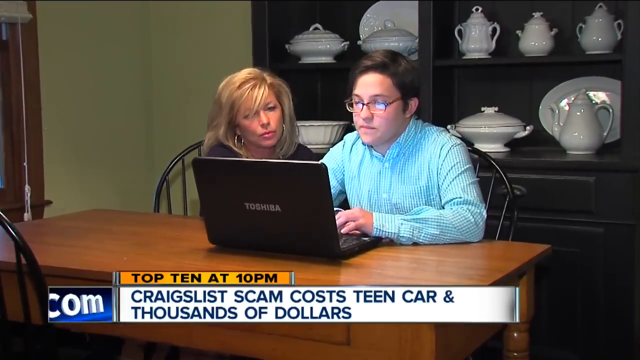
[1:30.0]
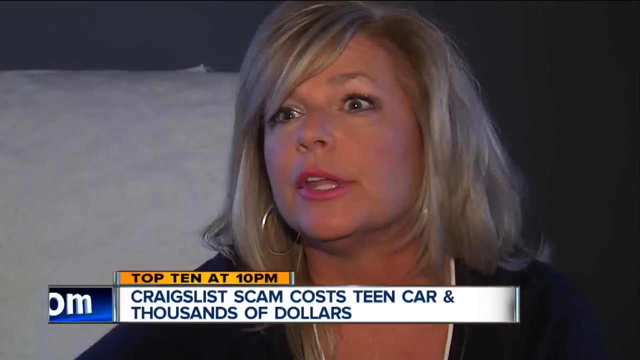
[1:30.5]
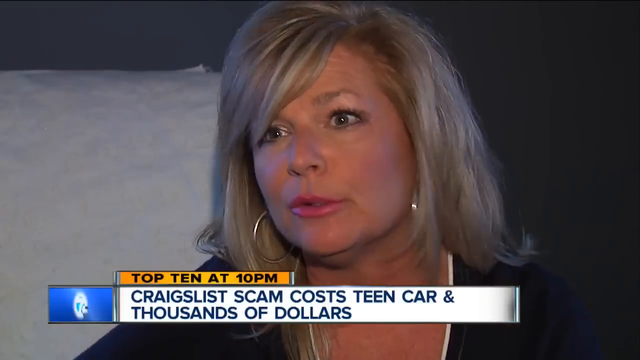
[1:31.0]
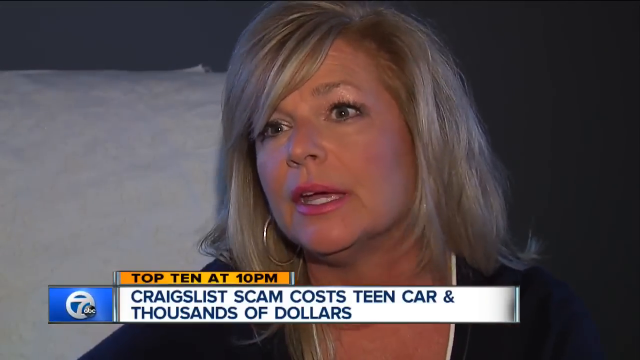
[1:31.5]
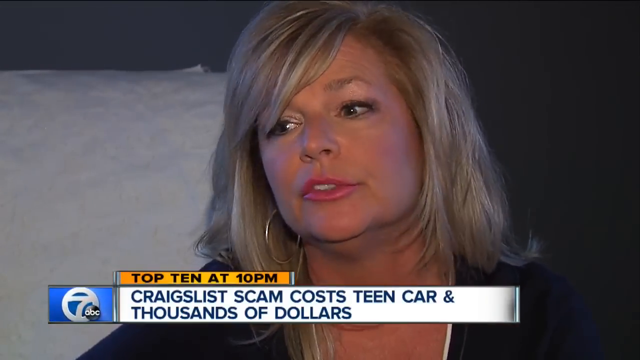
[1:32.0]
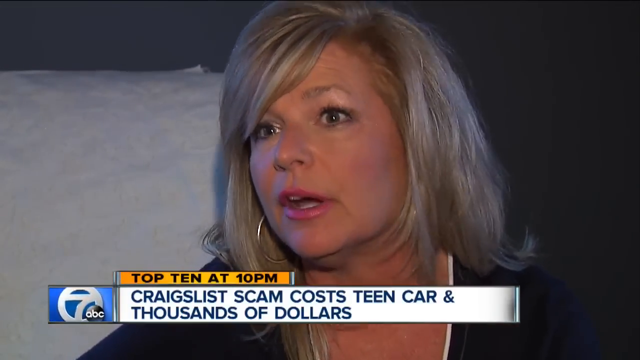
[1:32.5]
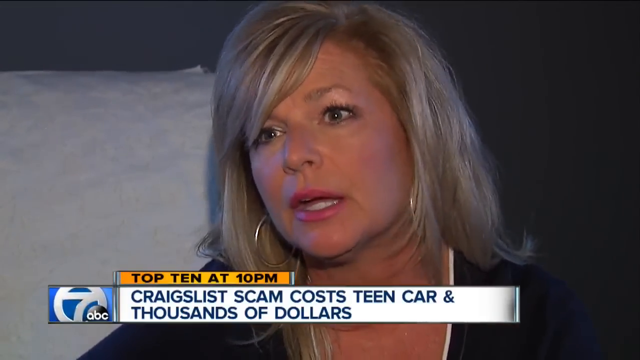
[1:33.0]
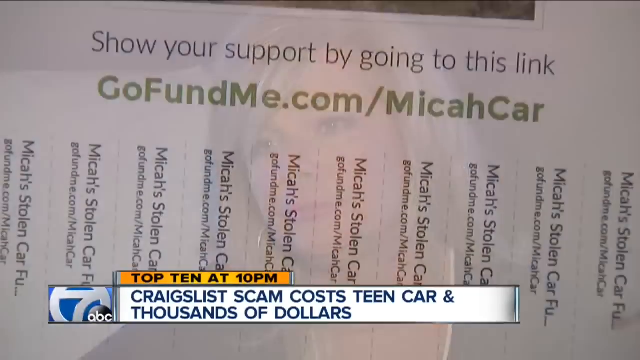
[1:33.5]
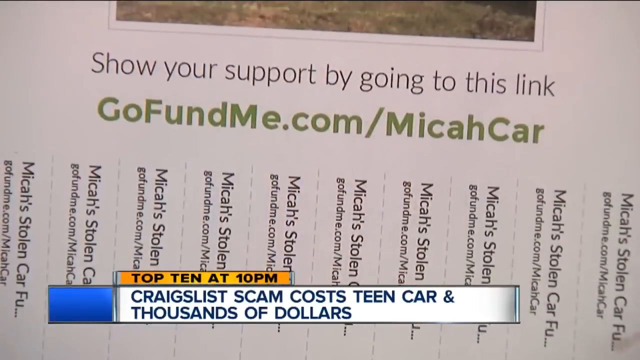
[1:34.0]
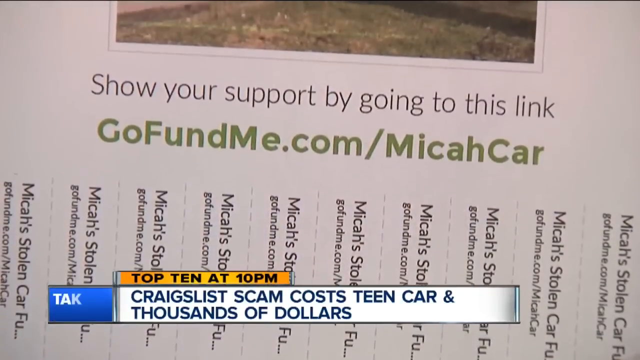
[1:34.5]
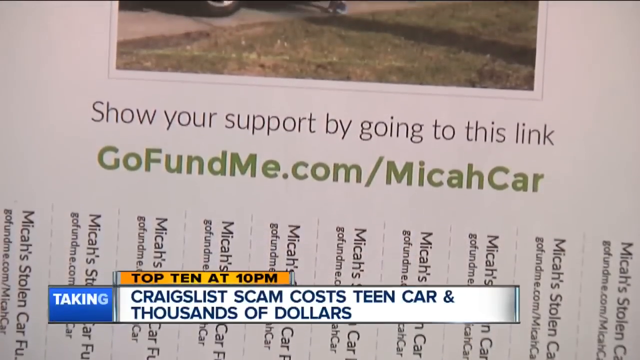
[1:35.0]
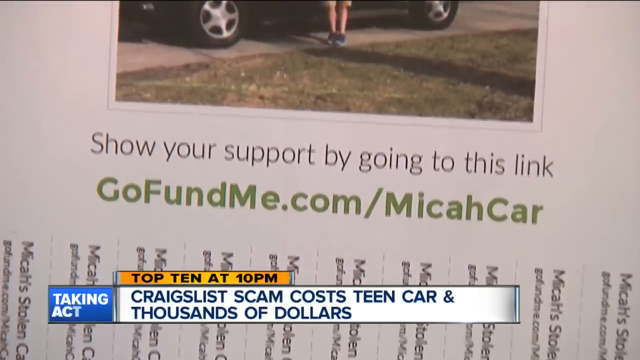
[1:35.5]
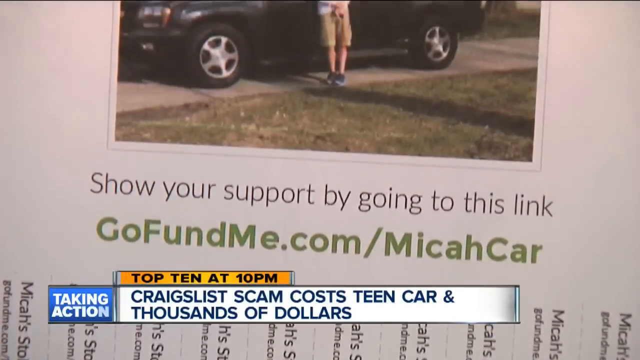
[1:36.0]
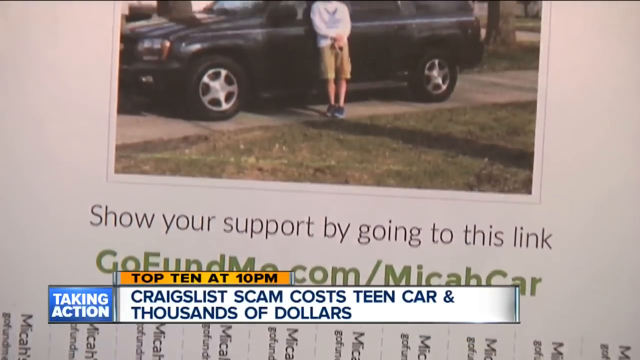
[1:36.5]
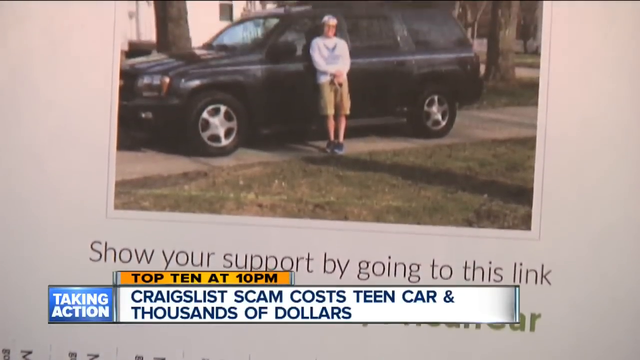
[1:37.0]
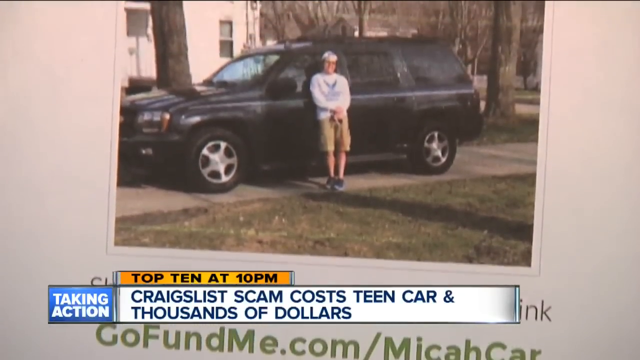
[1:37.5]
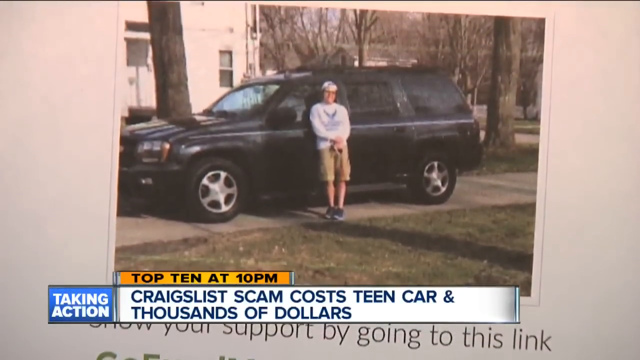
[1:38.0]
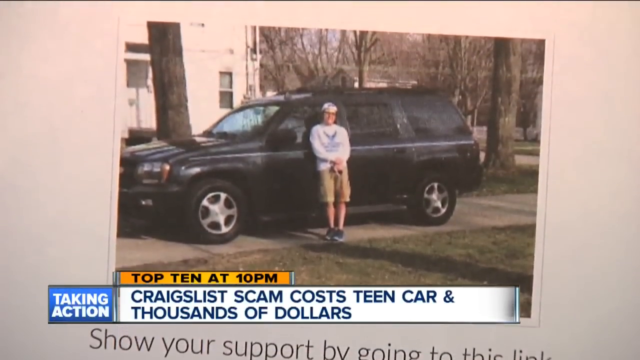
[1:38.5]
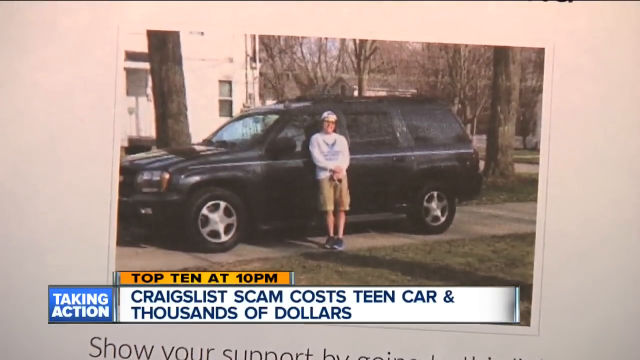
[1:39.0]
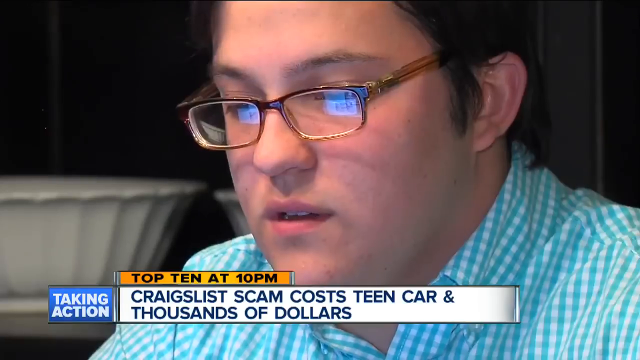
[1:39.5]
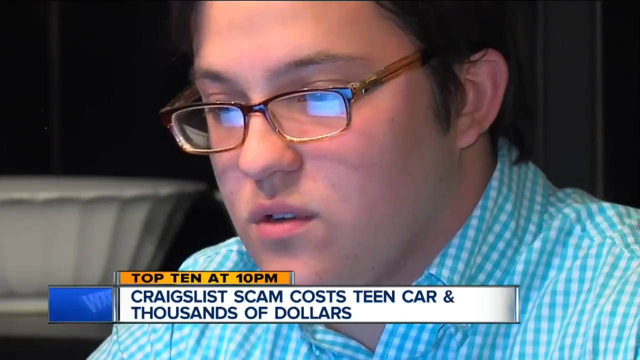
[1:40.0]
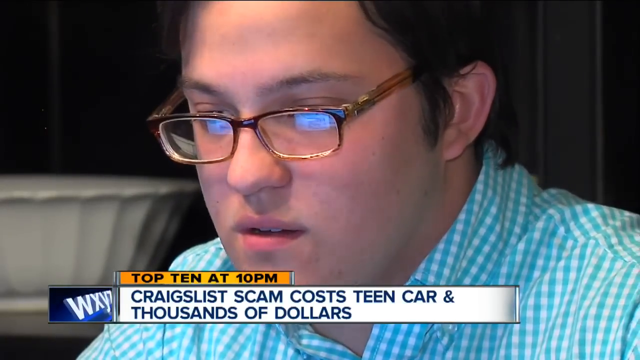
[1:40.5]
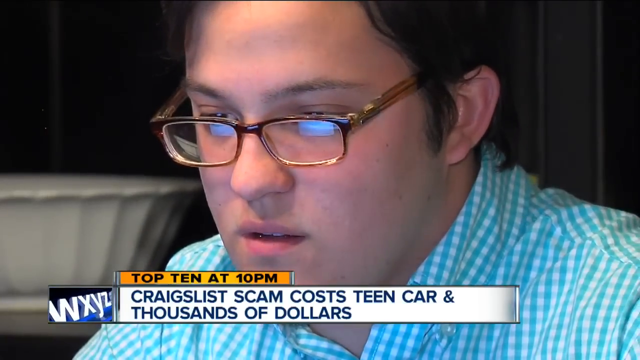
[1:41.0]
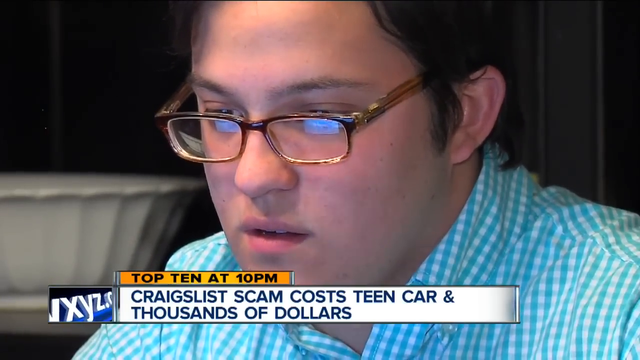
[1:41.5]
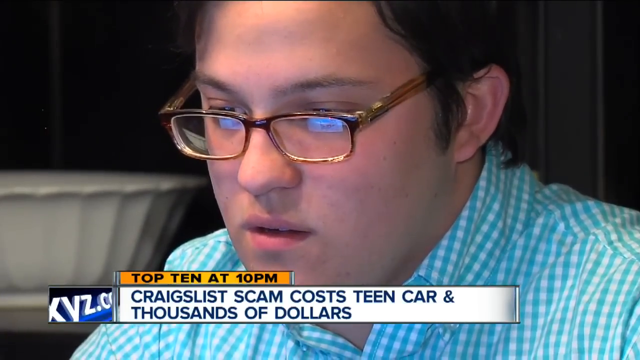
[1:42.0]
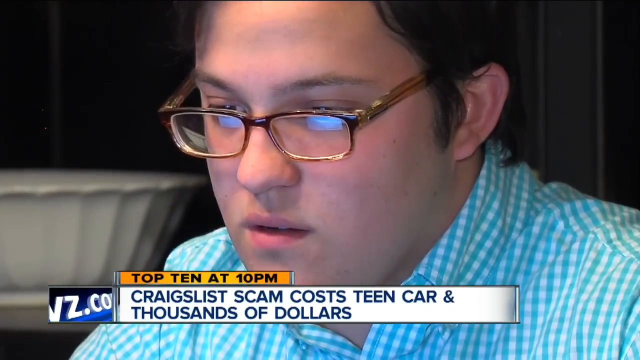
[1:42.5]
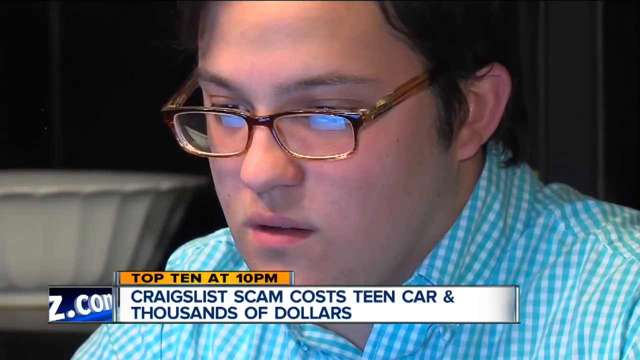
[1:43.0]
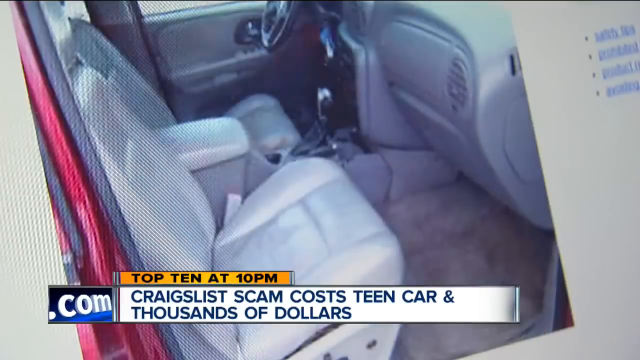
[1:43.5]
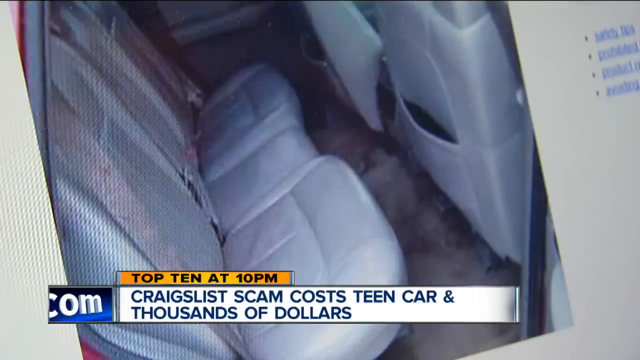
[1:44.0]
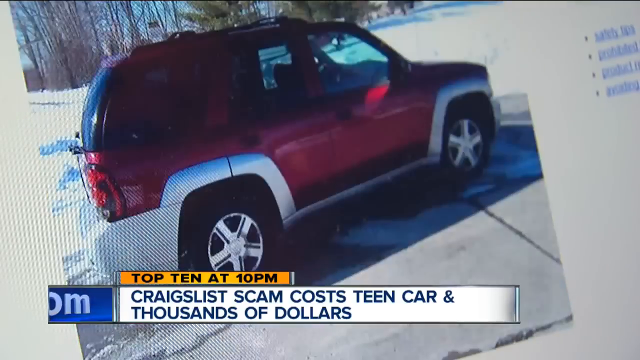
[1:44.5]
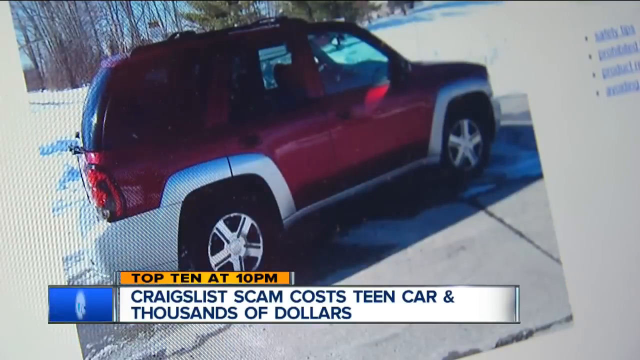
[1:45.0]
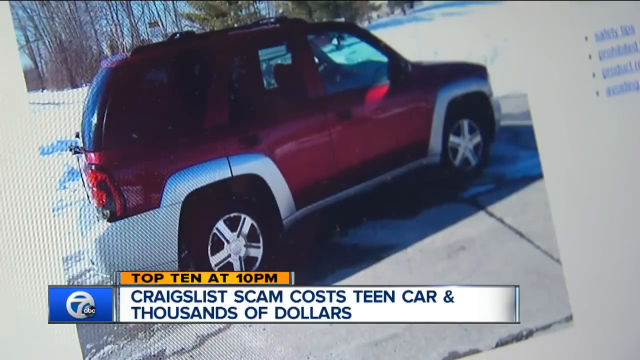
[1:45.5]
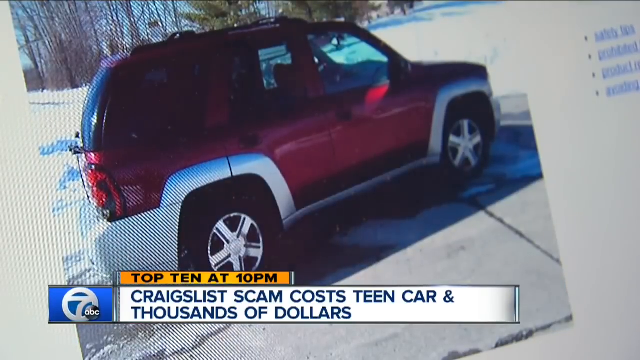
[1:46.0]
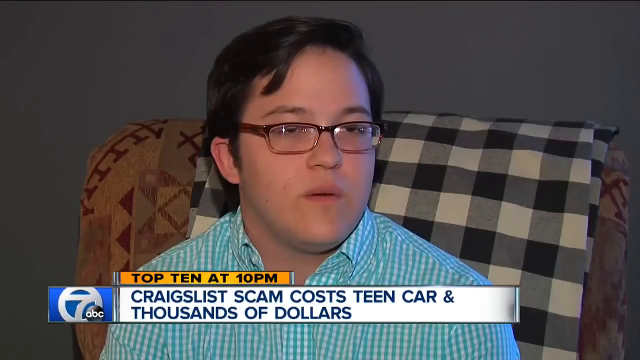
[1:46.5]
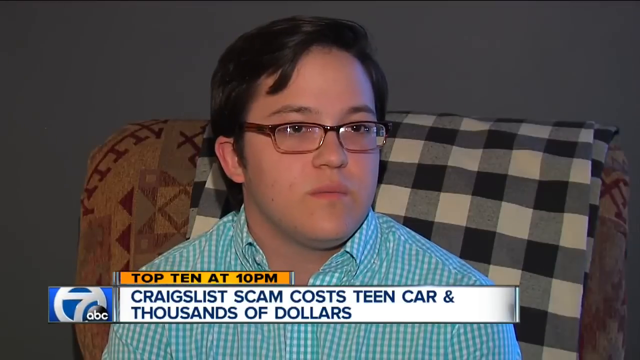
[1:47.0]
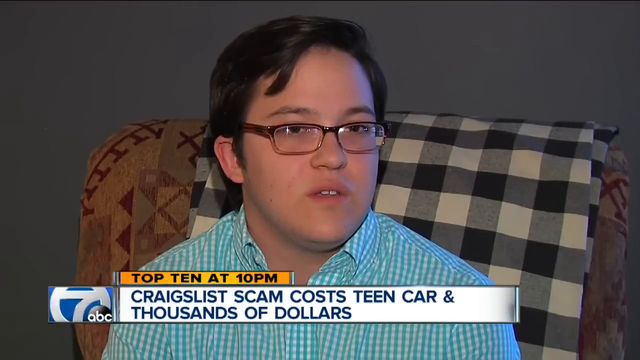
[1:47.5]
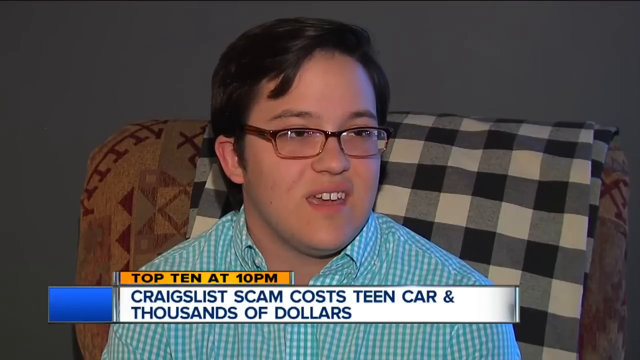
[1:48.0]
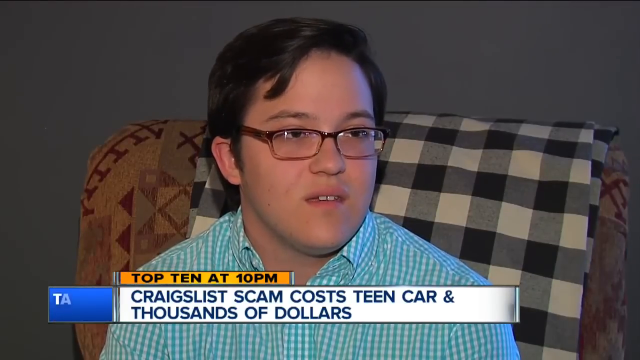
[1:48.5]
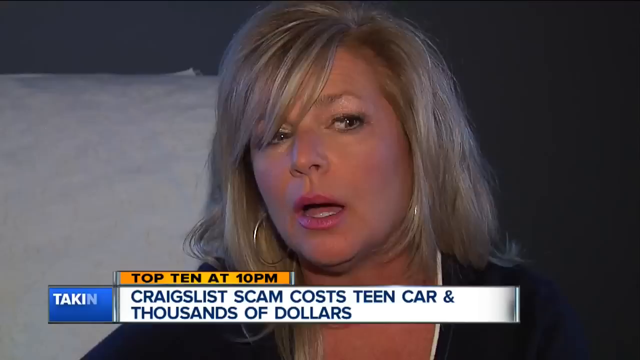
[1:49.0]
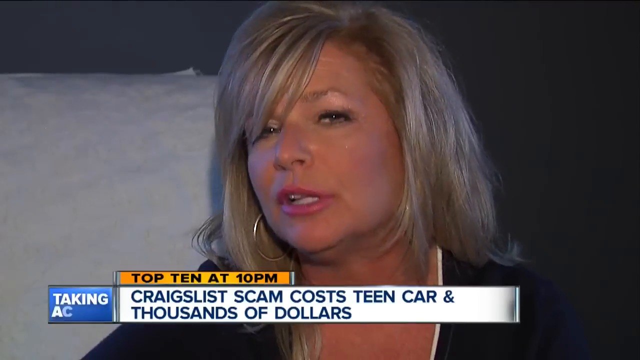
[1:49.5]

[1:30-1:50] The mother and son sit at a wooden table looking at the computer. The mom then talks, looking right next to the camera rather than directly at it. A written GoFundMe piece of paper appears, reading "show your support by going to this link GoFundMe.com/Micah Carr," with that same information repeated 10 times along the bottom in cut strips that can be torn off. The view zooms in on the earlier image of Micah standing in front of the SUV, then returns to Micah sitting at the table looking at his laptop, with a reflection visible in his glasses. Then several shots show the interior of a vehicle that looks to be a much smaller red SUV.